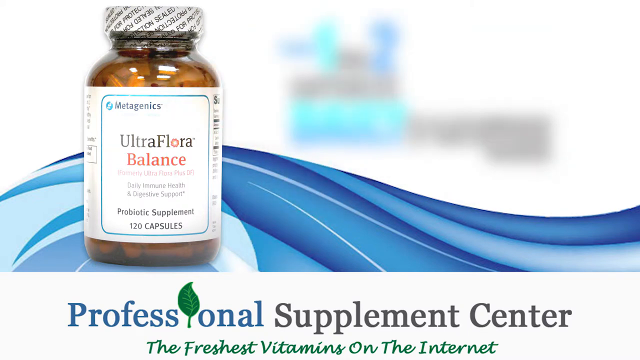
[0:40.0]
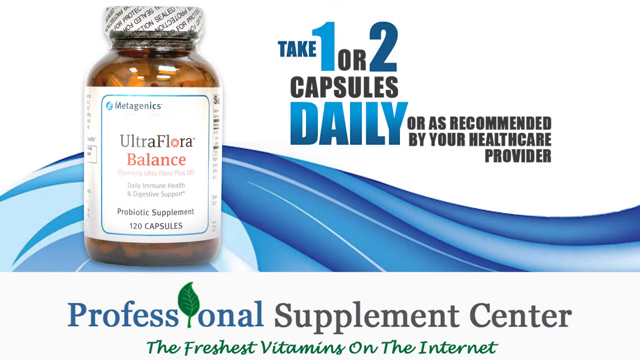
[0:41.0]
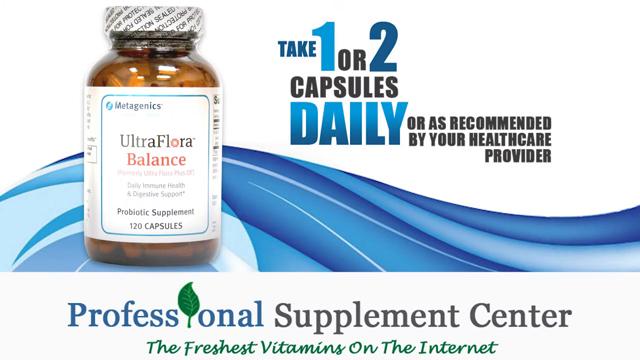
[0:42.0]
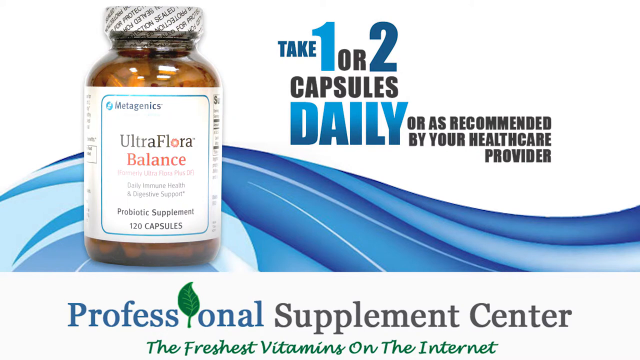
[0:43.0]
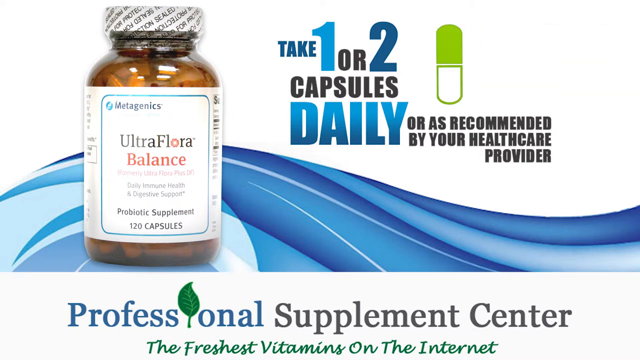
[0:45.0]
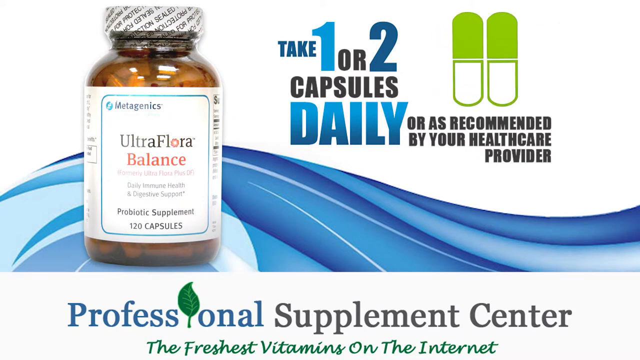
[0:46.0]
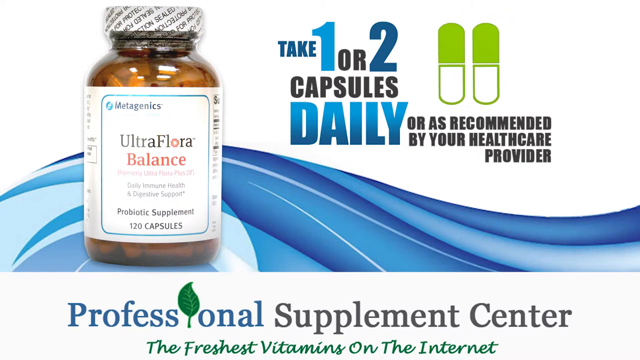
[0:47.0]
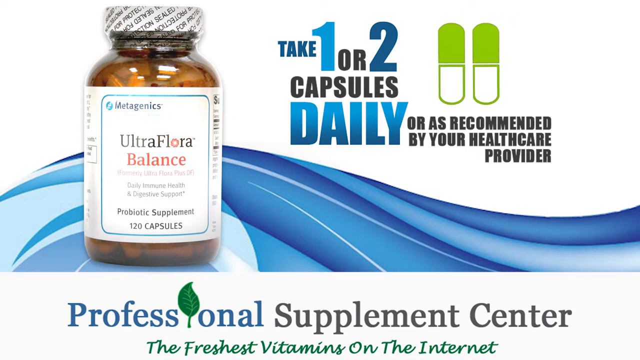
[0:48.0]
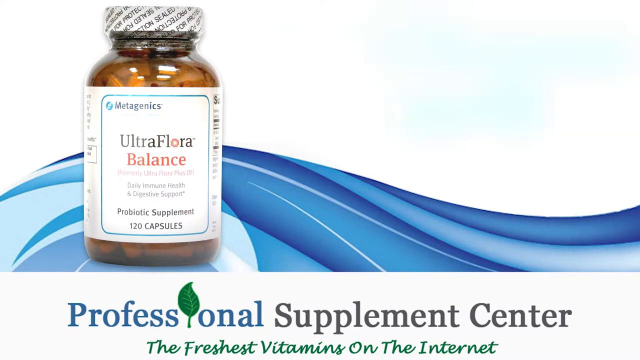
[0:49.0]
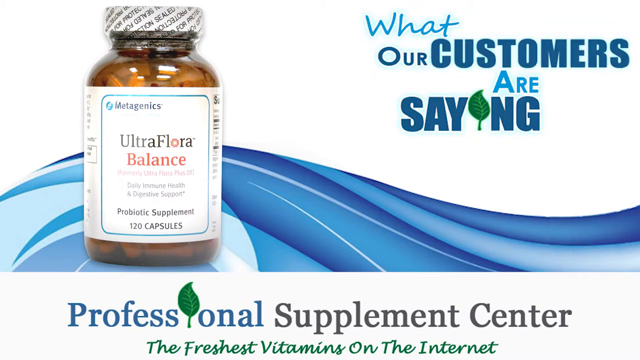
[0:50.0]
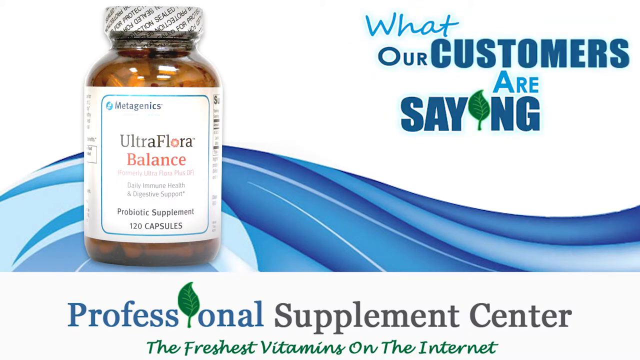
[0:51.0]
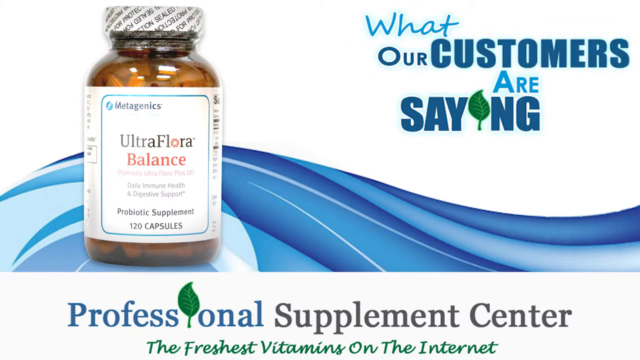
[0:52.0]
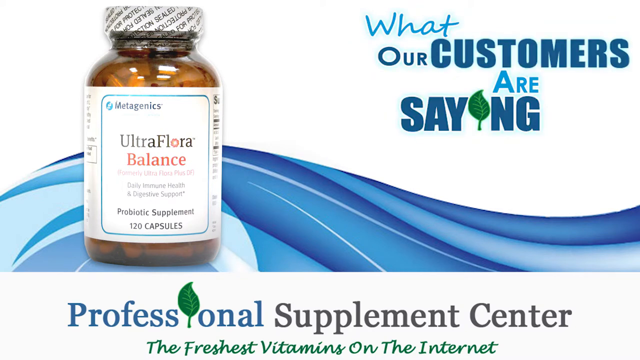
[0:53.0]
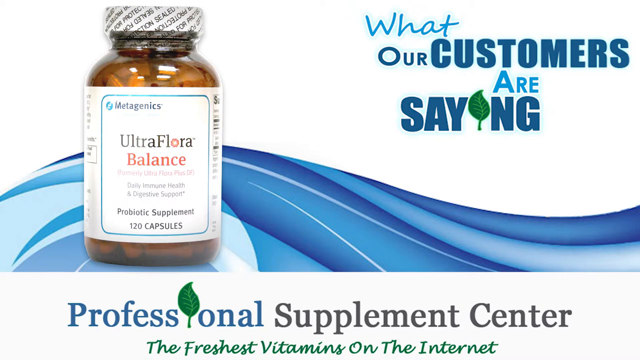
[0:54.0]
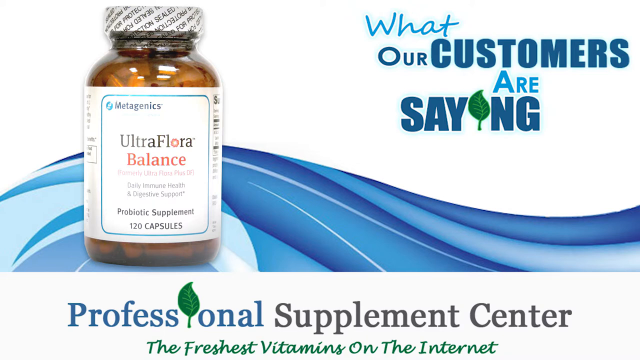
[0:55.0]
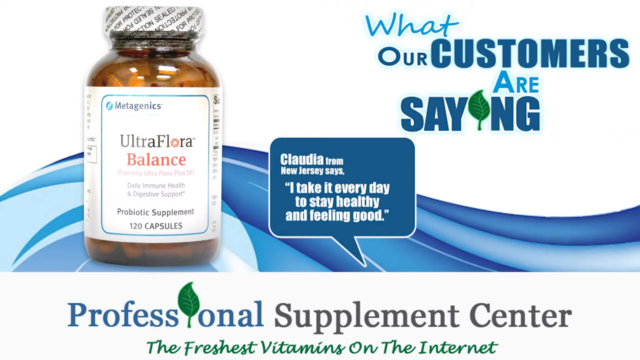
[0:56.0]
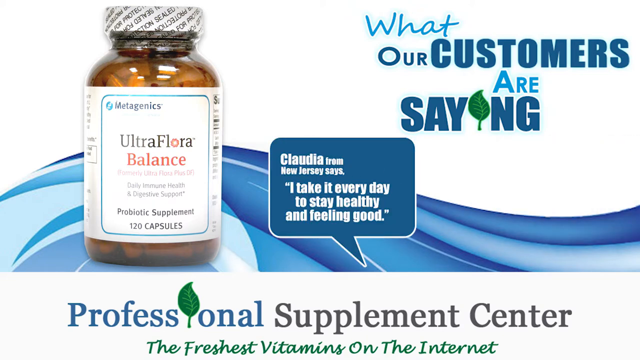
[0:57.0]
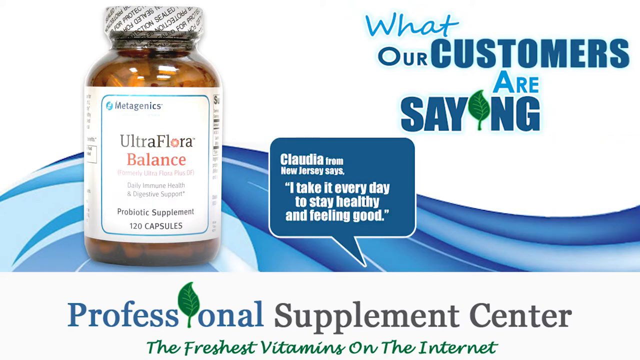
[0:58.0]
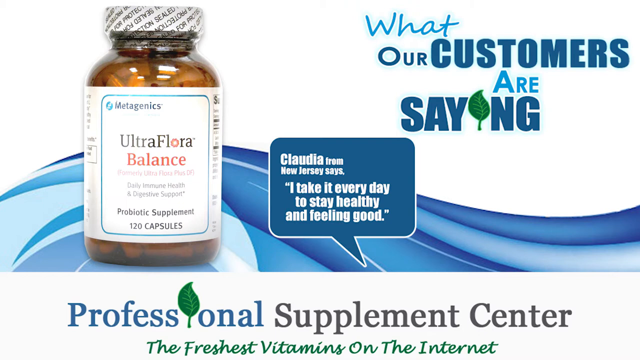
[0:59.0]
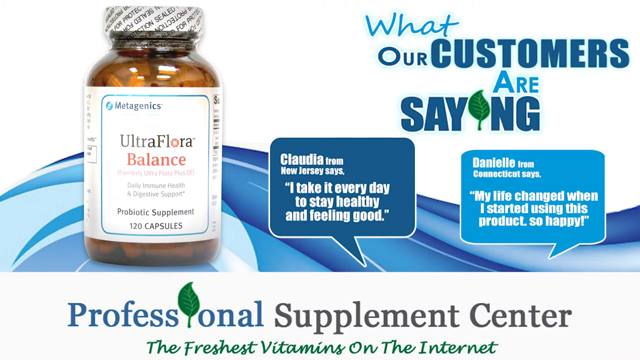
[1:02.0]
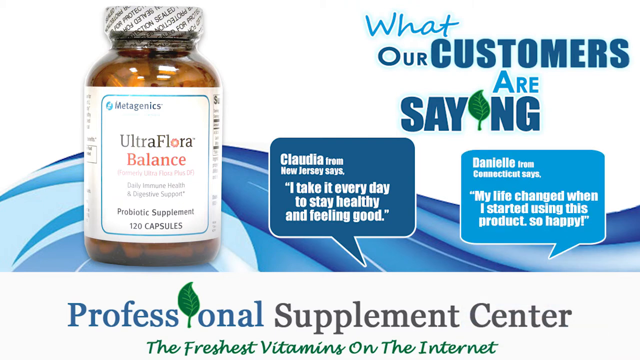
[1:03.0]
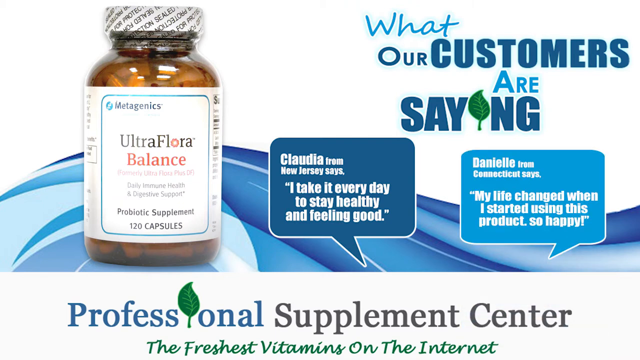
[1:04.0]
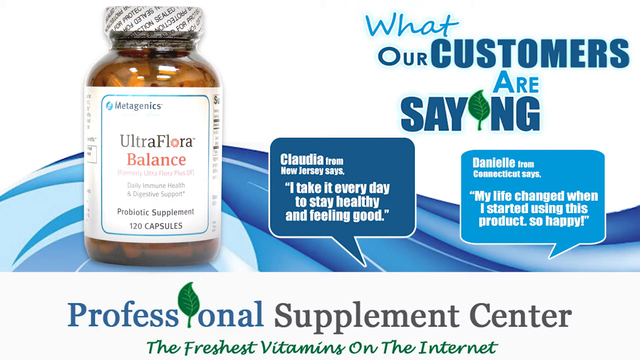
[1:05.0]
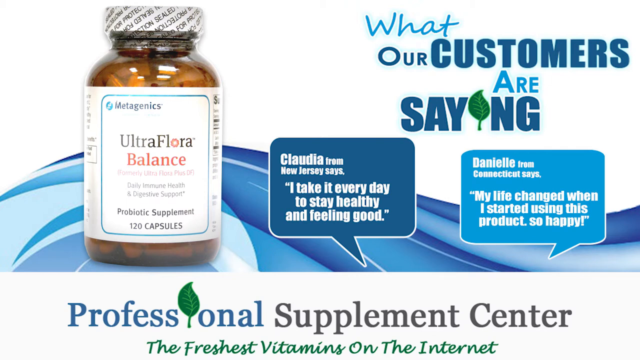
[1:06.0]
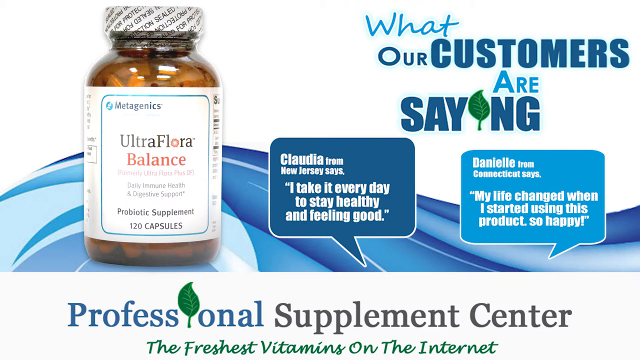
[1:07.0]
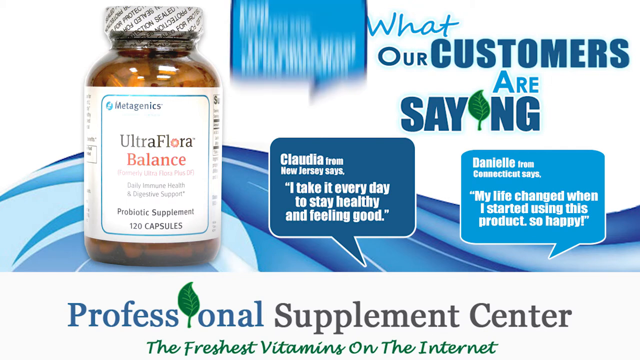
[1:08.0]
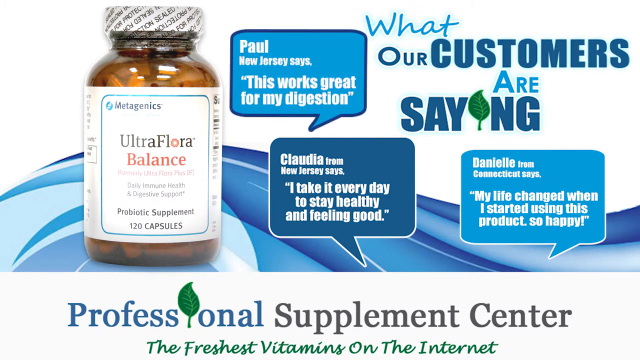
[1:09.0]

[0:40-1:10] Dosage information reads "take one or two capsules daily or as recommended by your health care provider". There is a green design or object that looks like a capsule. An inscription reads "what our customers are saying", followed by testimonials from three people: Claudia from New Jersey says "i take it every day to stay healthy and feeling good"; Daniel from Connecticut says "my life changed when I started using this product. So happy"; and Paul, New Jersey, says "this works great for my digestion".